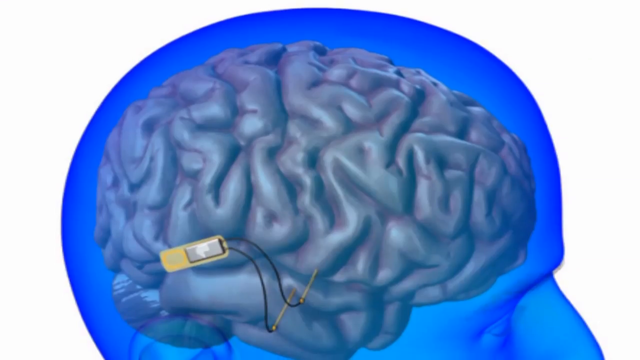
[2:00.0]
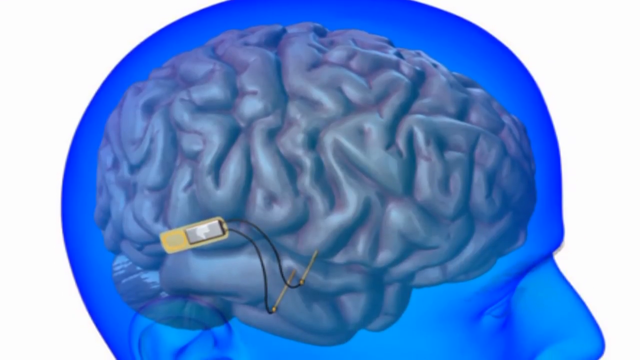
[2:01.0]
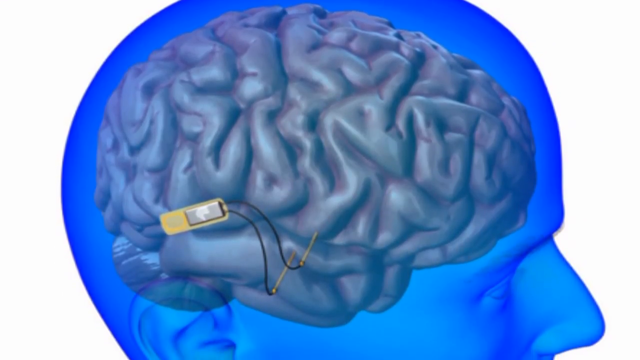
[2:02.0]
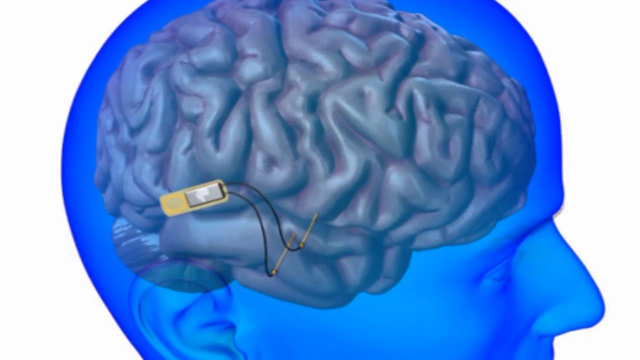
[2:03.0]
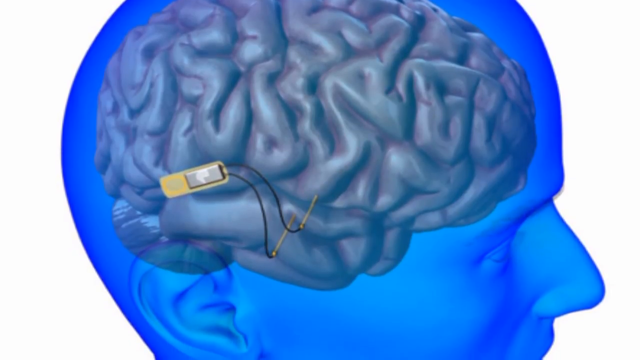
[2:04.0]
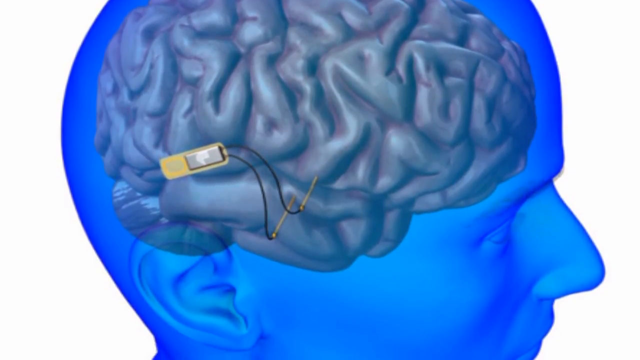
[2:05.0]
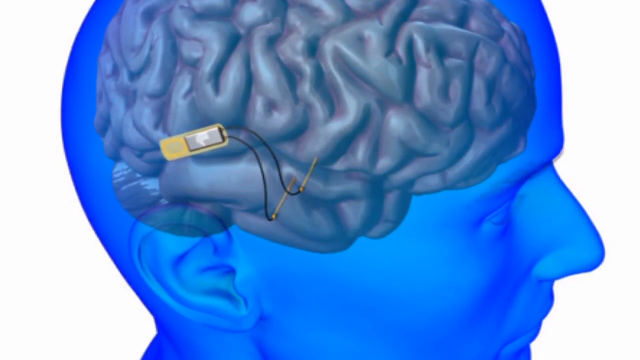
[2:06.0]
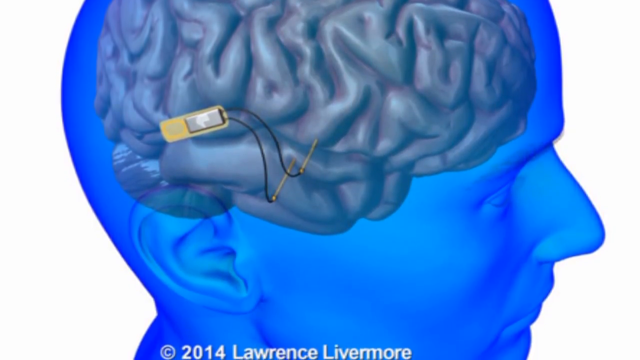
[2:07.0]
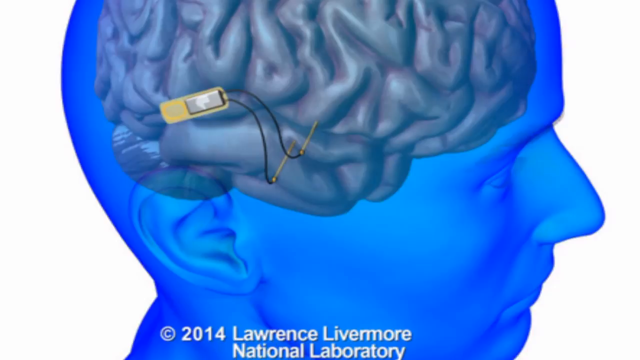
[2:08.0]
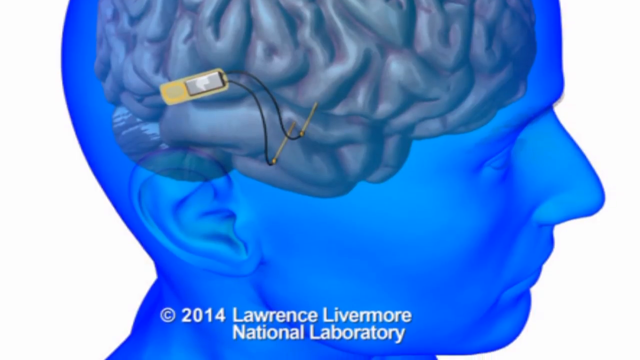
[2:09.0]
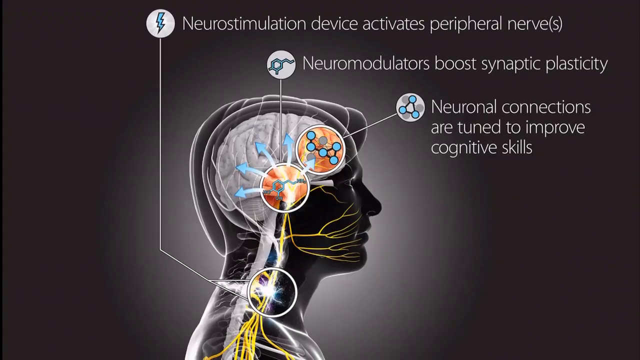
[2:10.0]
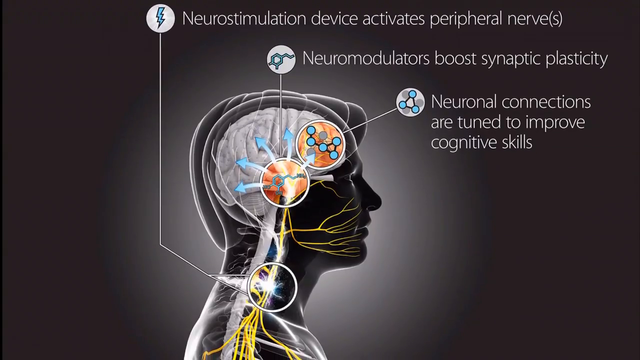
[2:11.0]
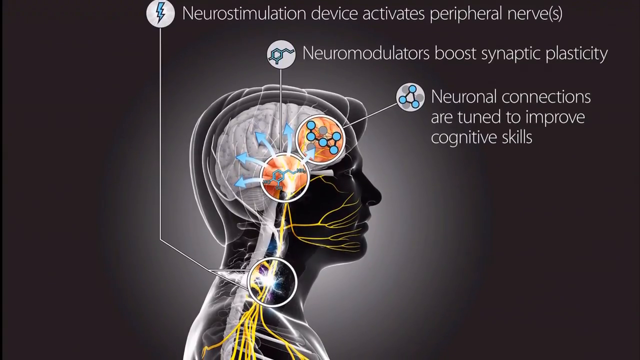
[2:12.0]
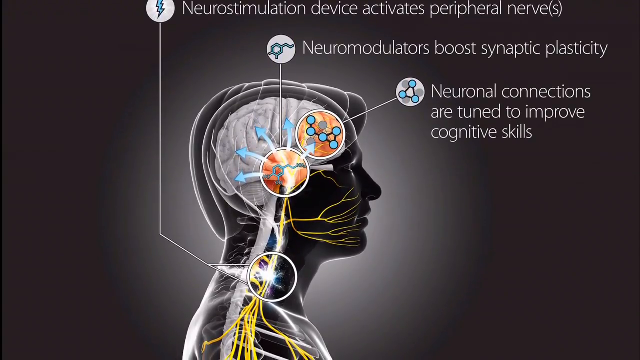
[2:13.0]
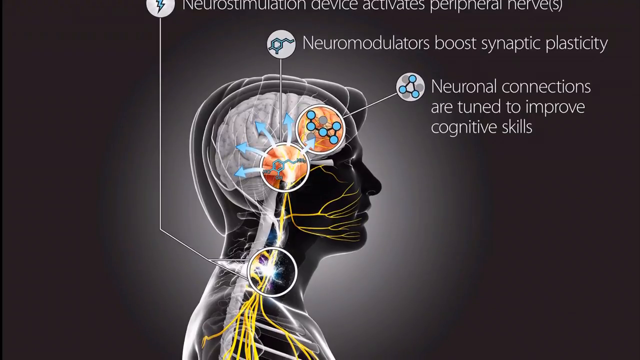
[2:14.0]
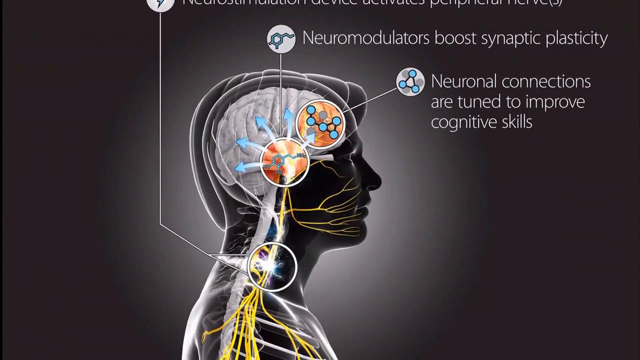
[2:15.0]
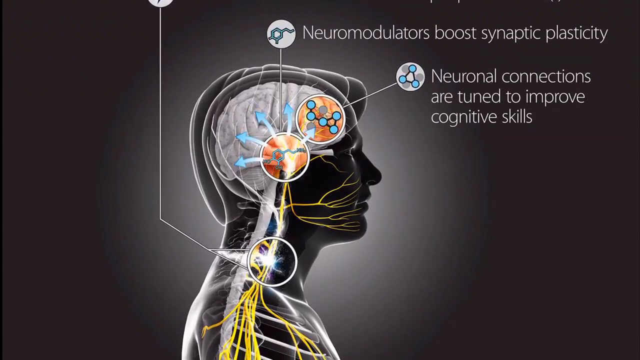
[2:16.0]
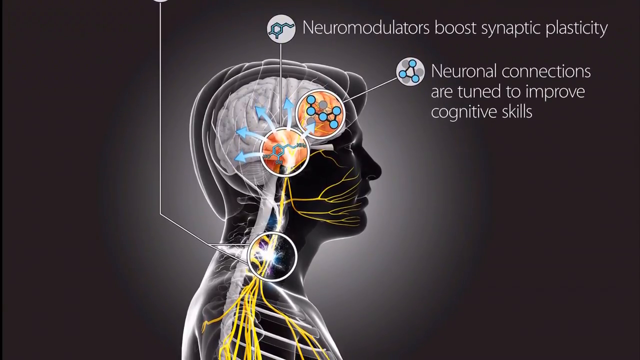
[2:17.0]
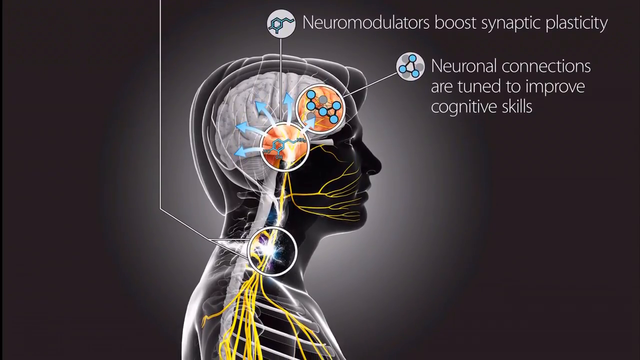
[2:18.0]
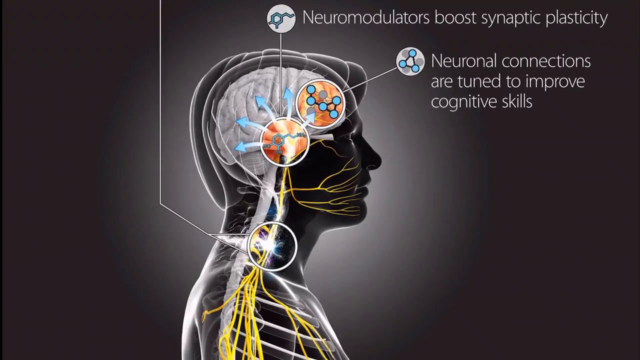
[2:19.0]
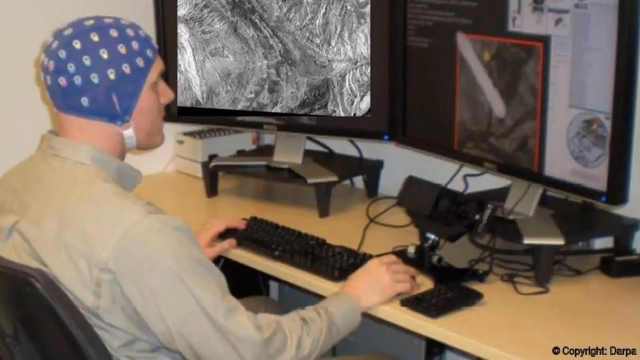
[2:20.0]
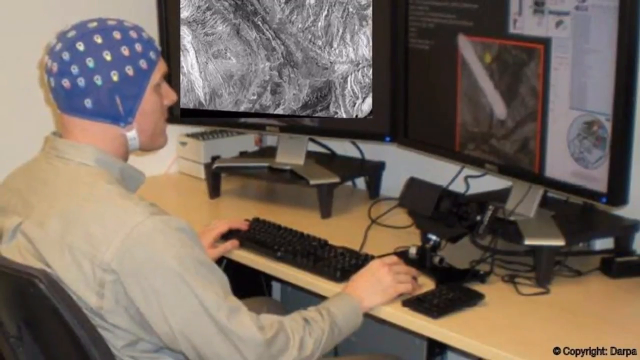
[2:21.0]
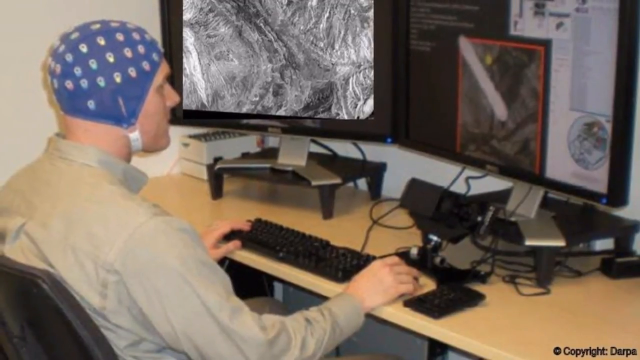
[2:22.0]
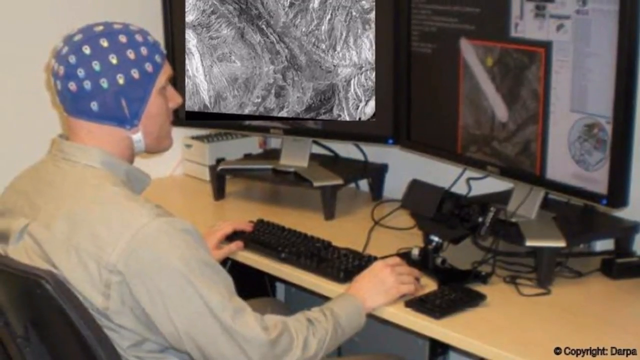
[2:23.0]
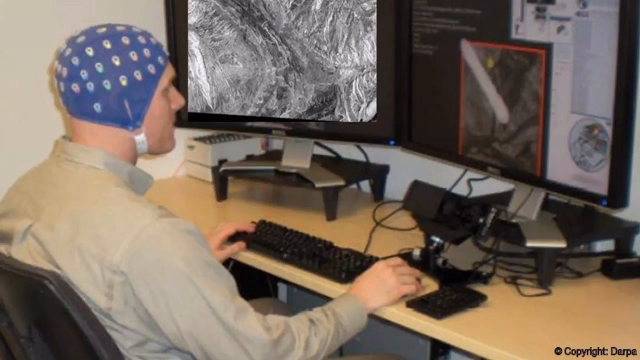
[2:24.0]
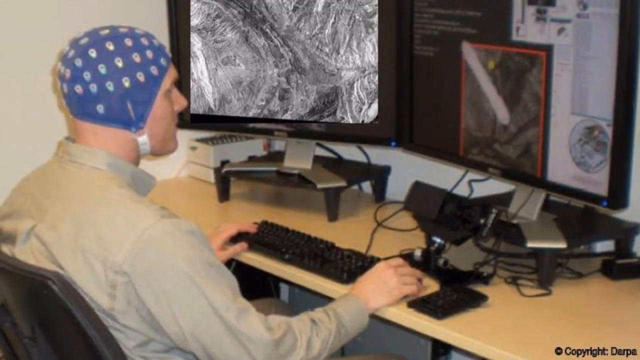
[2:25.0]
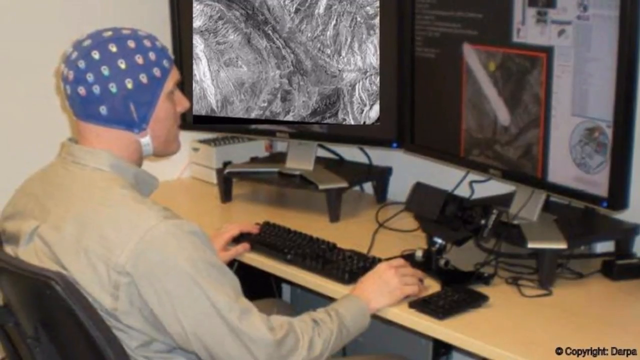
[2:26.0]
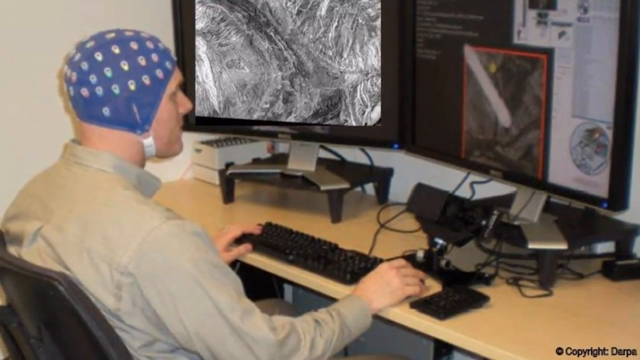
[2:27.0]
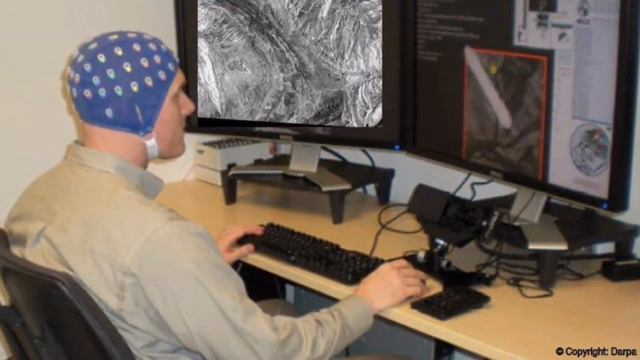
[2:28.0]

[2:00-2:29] A brain appears that looks like it has a microchip plugged into it: a yellow chip with two black wires and two gold rods right next to the side of the brain. A person's head and face are also shown from a side angle, very zoomed in and blue. The camera continues to move downward, as it does for all the other images. A copyright sign in white text reads "2014 Lawrence Livermore National Laboratory". Next is a diagram with three points: the top one says "neuro stimulation device activates peripheral nerves", the one below says "neuromodulators boosts synaptic plasticity", and the final one says "neuronal connections are tuned to improve cognitive skills", with the areas where these happen shown within a human diagram. The final image shows a person wearing a blue-like headband using a computer, with one hand on a black keyboard and his right hand on the computer mouse. The video then ends.